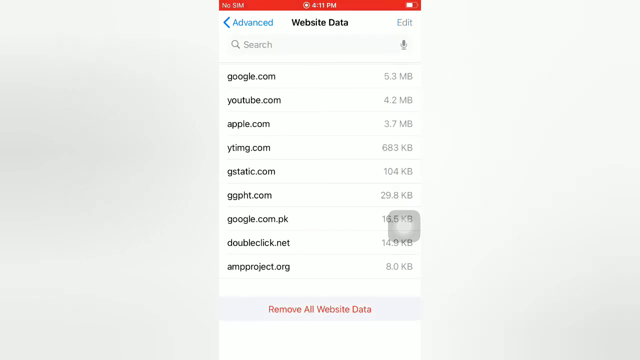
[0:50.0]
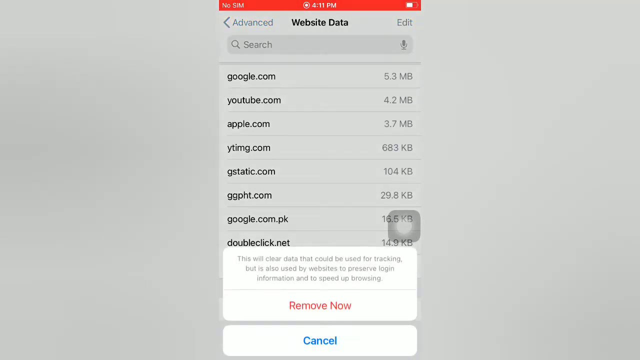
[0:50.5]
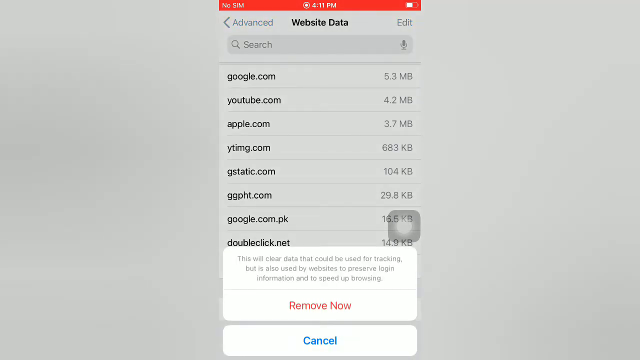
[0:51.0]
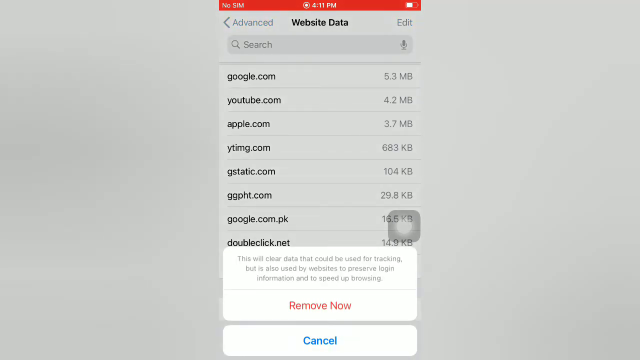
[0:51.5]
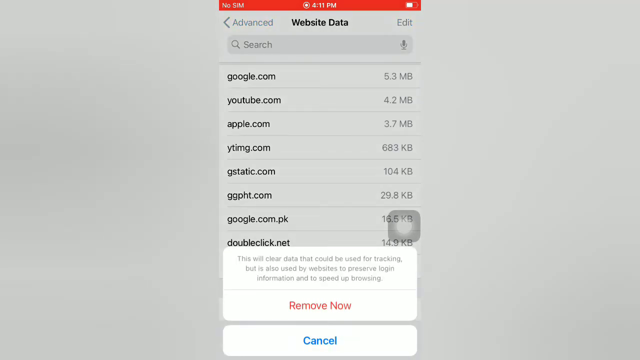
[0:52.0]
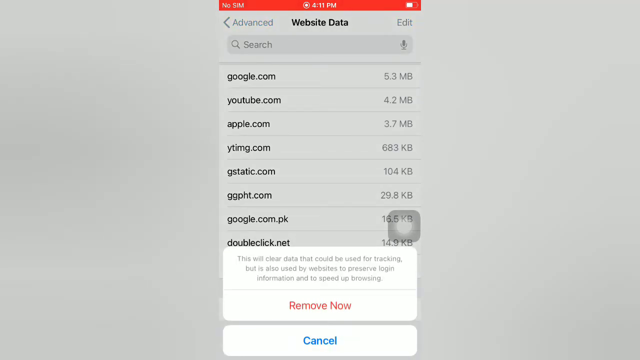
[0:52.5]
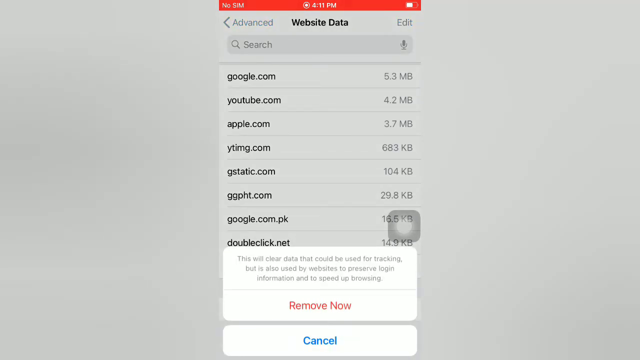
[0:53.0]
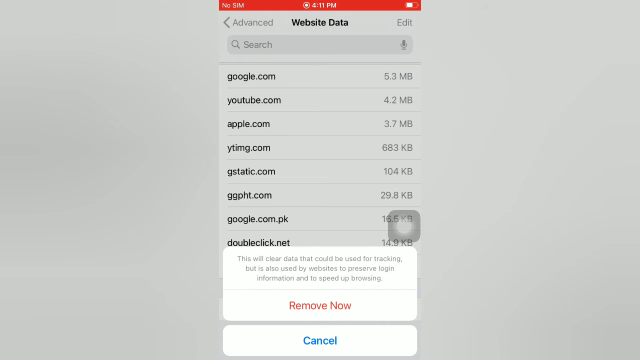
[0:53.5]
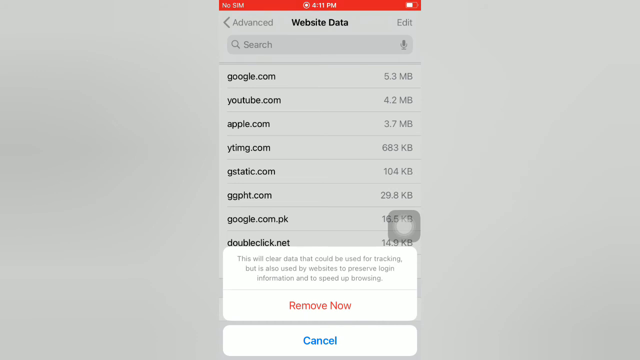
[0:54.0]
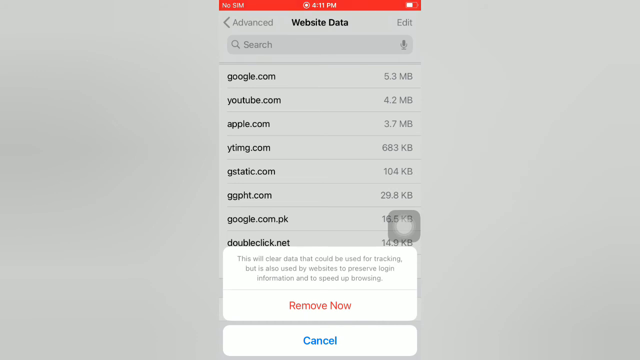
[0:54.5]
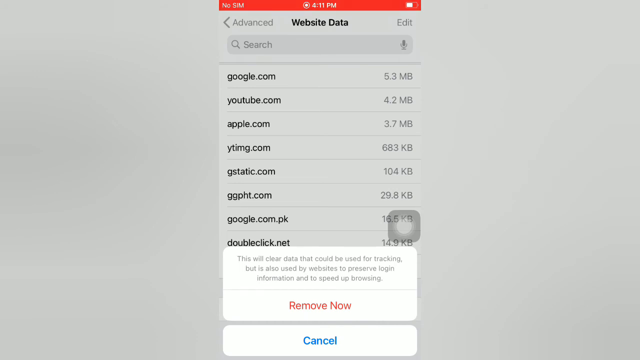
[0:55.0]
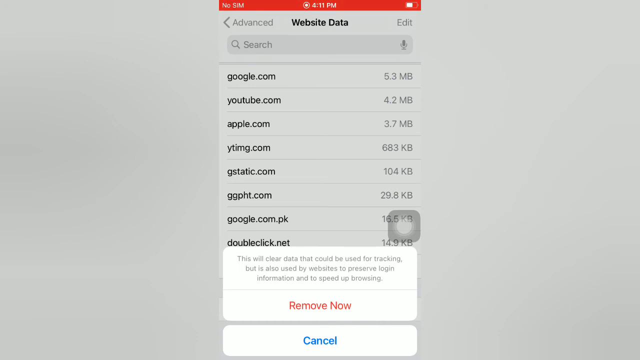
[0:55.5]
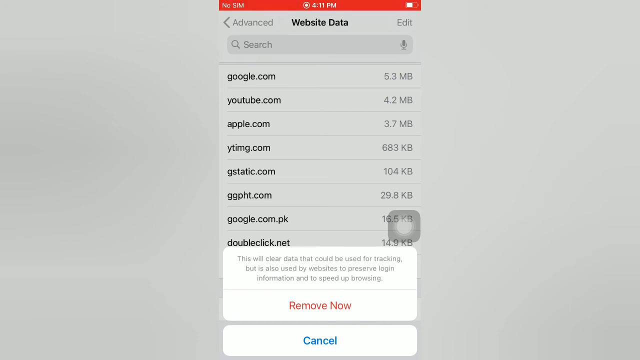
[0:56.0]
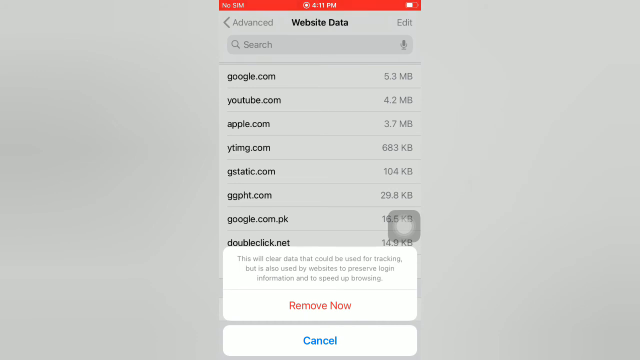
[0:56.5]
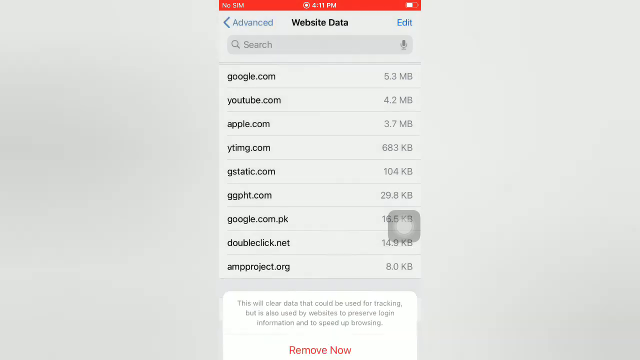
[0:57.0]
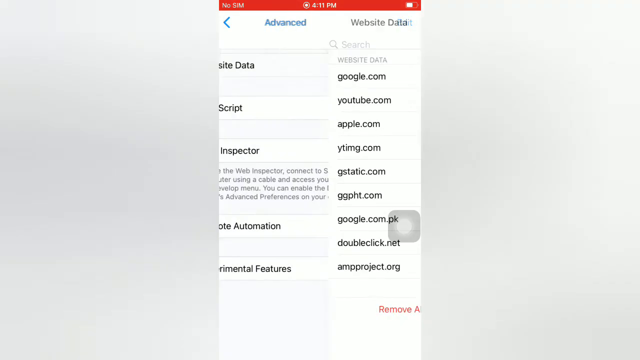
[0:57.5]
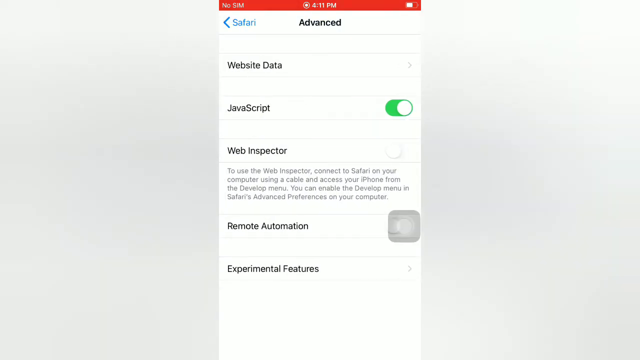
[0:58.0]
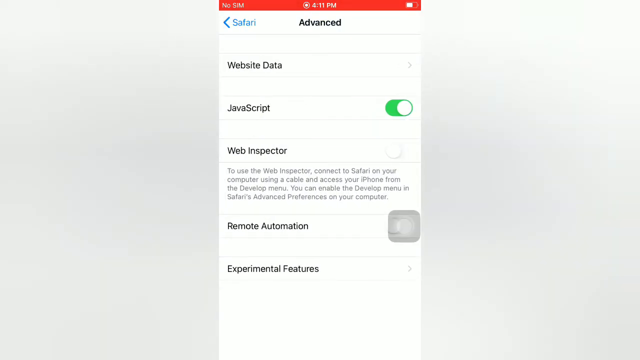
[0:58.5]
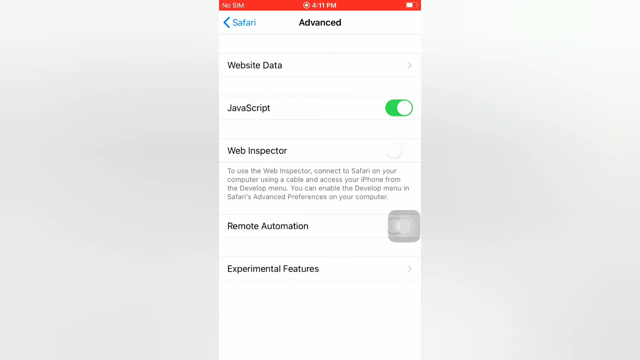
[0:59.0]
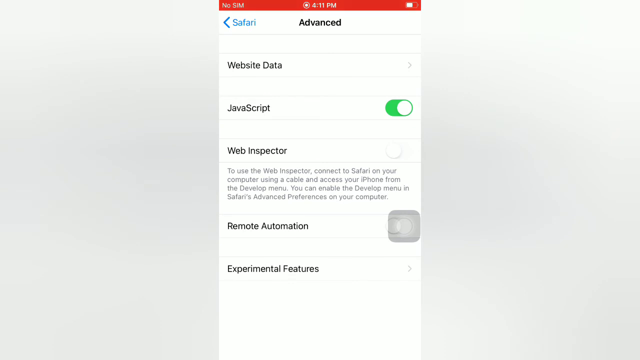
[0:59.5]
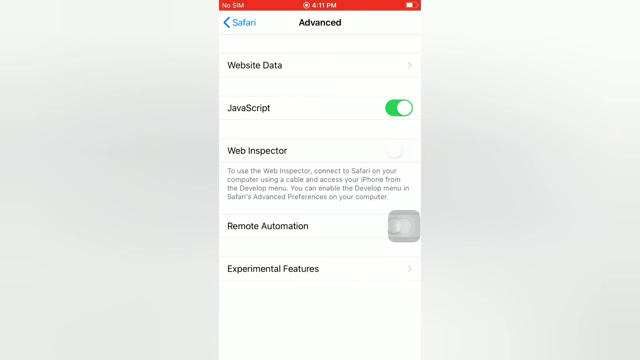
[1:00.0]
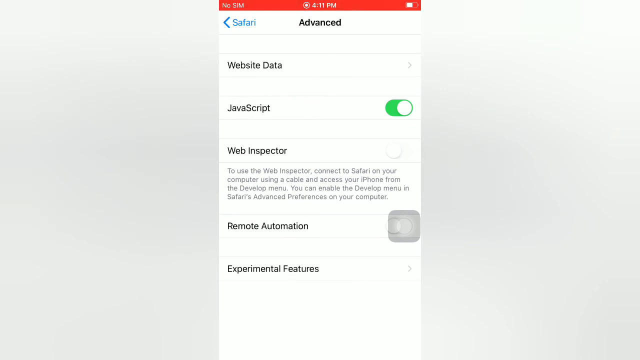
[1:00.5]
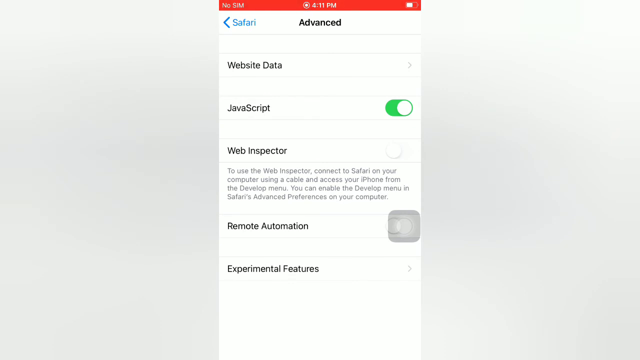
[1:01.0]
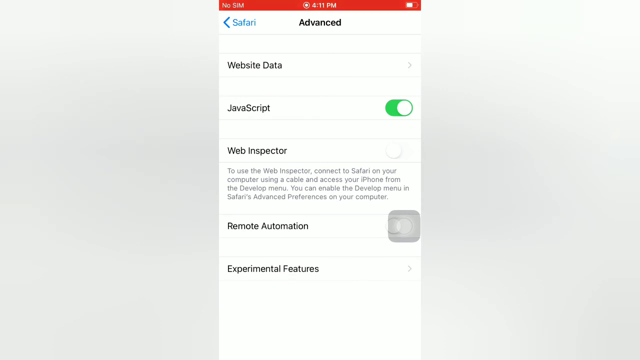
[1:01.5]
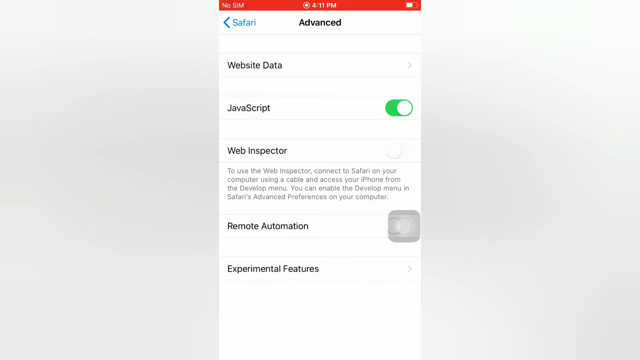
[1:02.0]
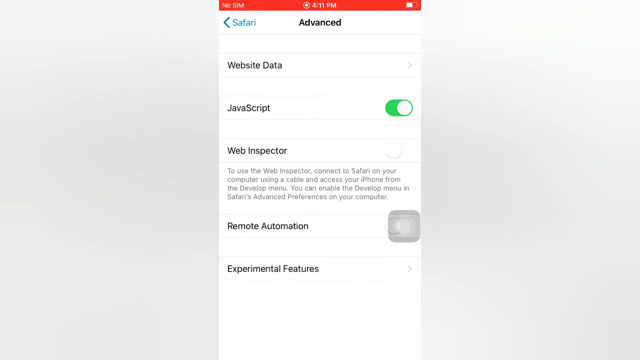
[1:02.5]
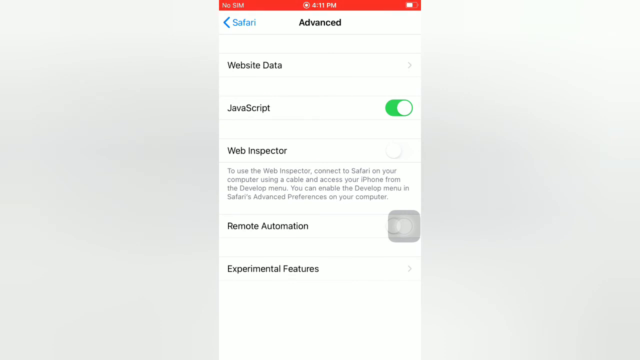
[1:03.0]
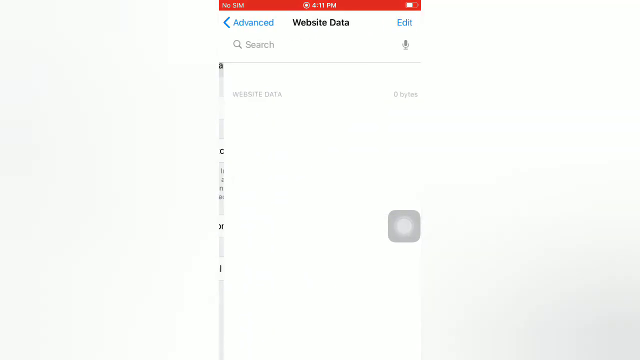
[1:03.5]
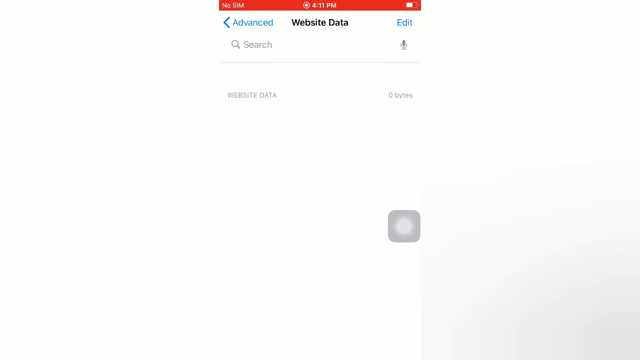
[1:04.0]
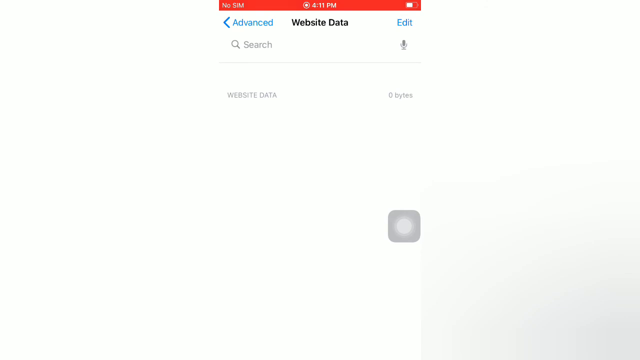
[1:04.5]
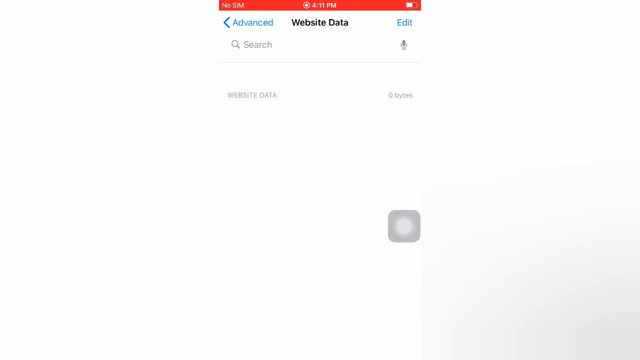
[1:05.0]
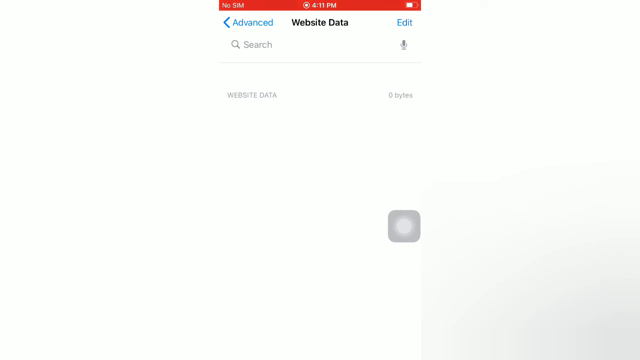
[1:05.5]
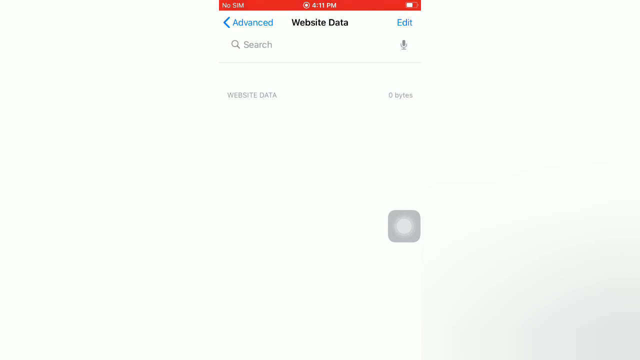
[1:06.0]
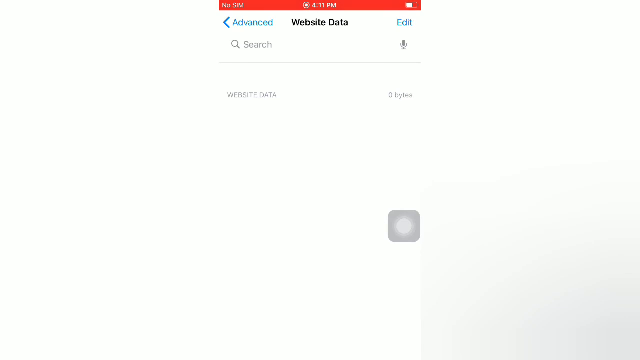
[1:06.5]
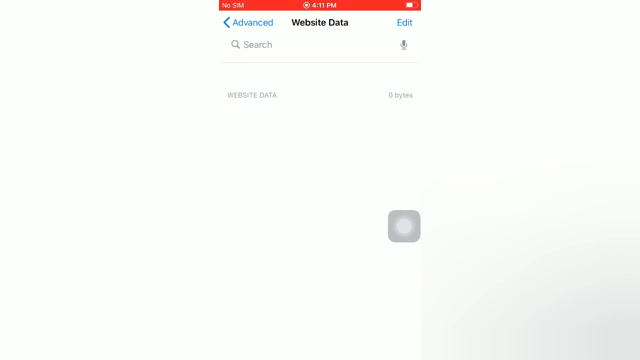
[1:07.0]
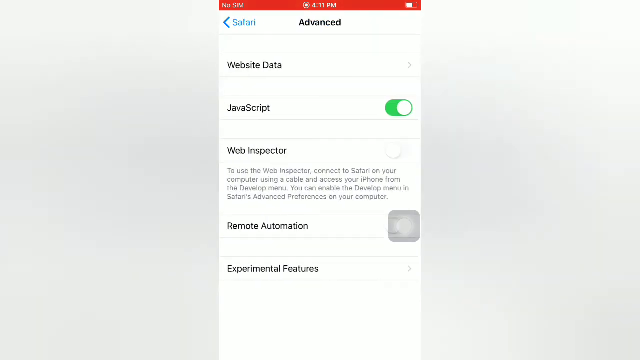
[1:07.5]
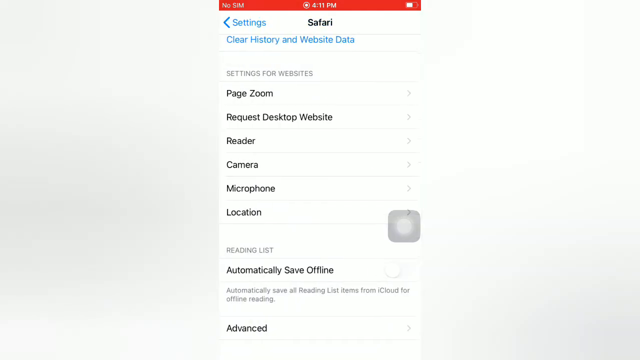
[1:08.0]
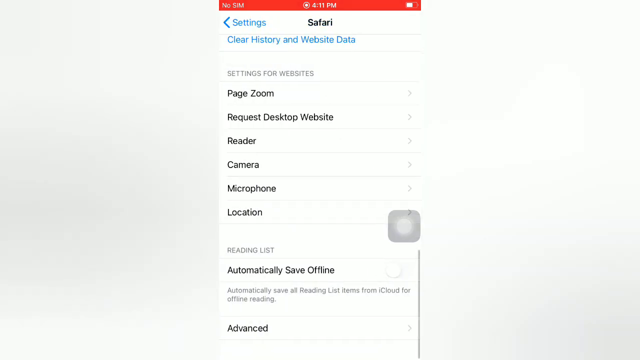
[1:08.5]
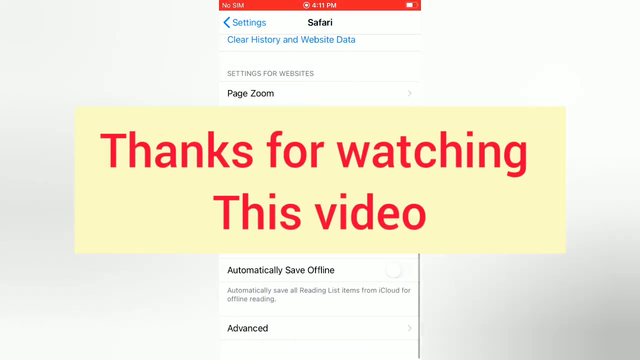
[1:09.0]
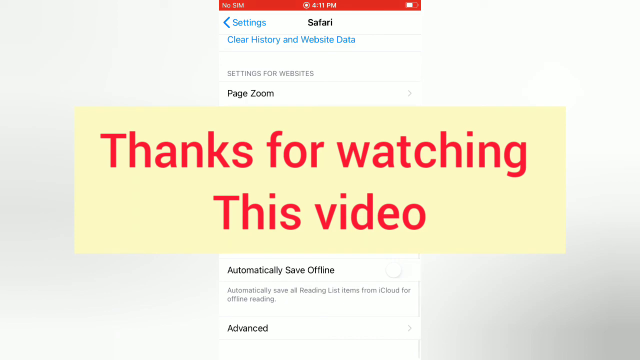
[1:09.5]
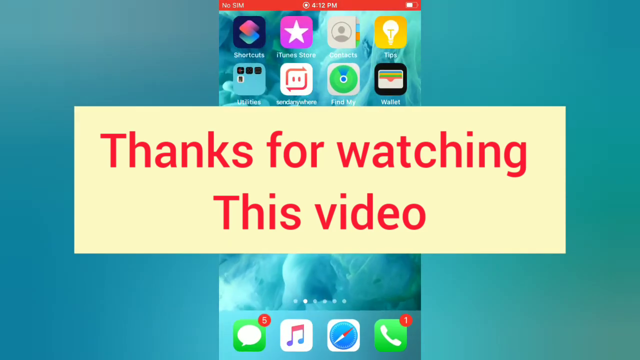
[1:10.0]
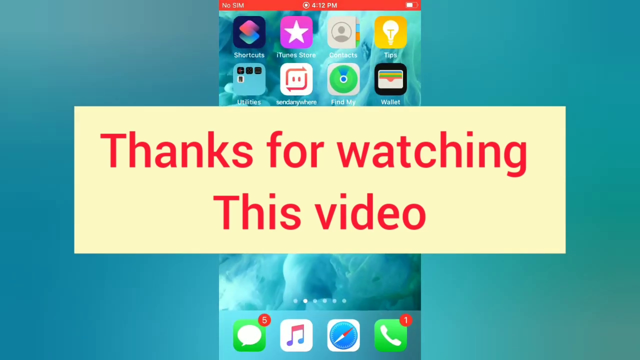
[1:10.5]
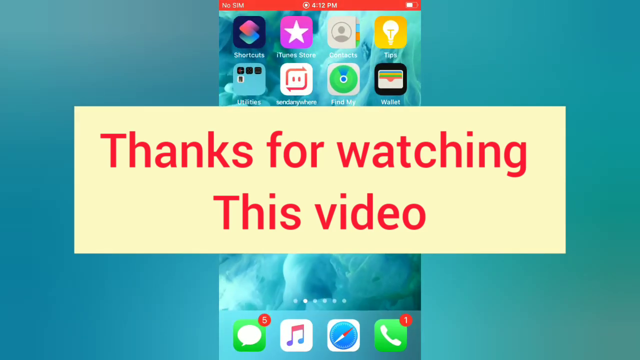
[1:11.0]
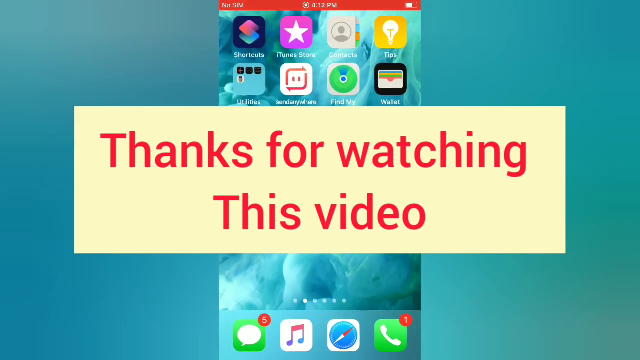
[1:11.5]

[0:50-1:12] The website data page, reached from settings, is open on an iPhone screen, showing different websites and the space taken by each in MB and KB. A white dialogue box pops up below with remove now and cancel buttons for removing all website data. Remove now is clicked and the website data is deleted, and the user is taken back to the advanced page. Website data in the advanced page is clicked again, and it now shows that no website data is stored on the device, indicated by empty white space. The user goes back to the advanced page by clicking the back arrow at the top, and then back to the safari page. The settings app is closed, and then a rectangular pop-up box appears over the mobile screen with a 'thanks for watching this video' message in big red letters on a sandal background.